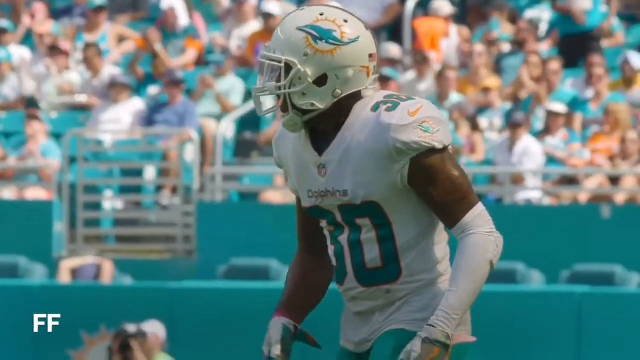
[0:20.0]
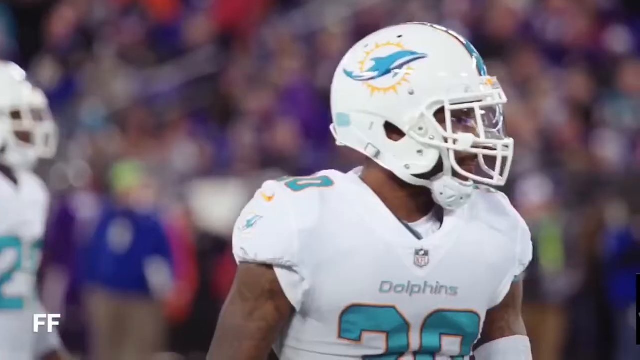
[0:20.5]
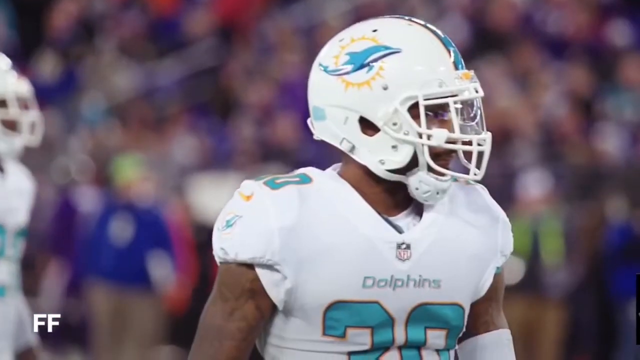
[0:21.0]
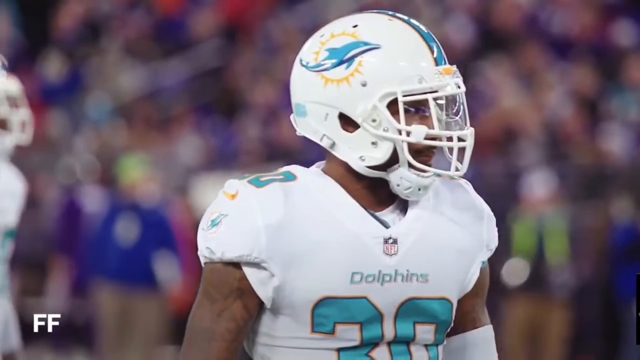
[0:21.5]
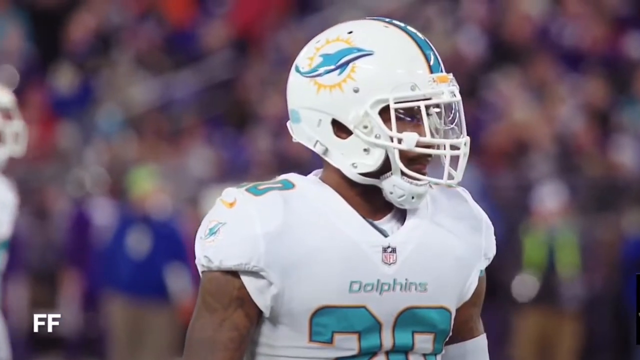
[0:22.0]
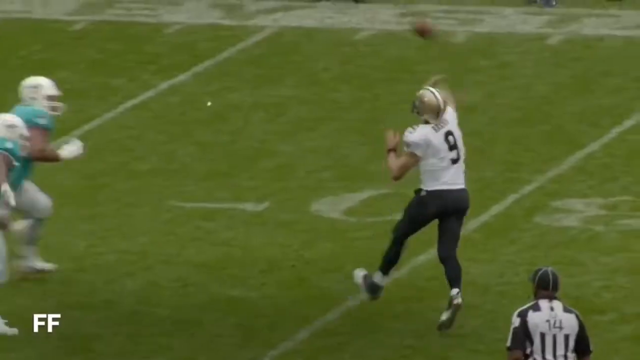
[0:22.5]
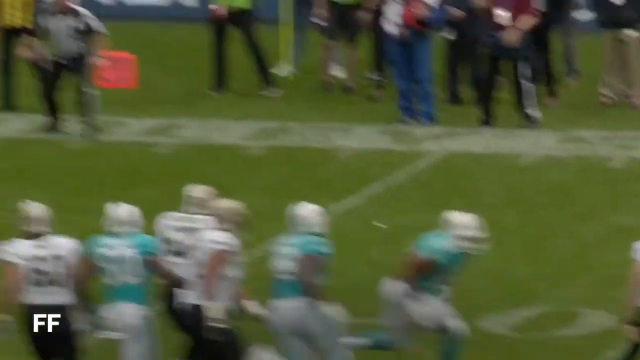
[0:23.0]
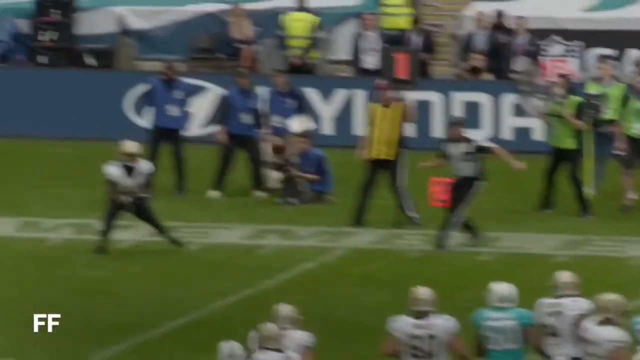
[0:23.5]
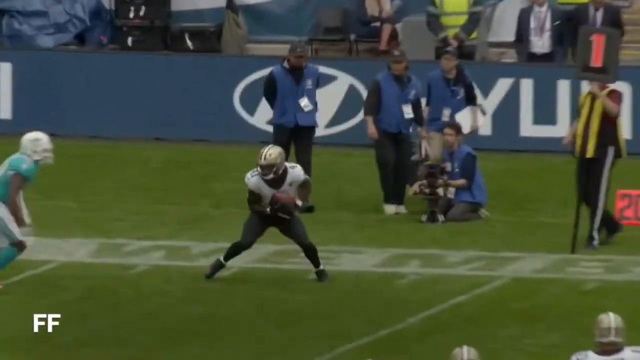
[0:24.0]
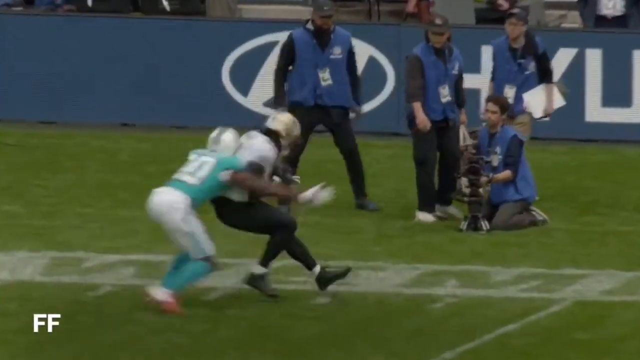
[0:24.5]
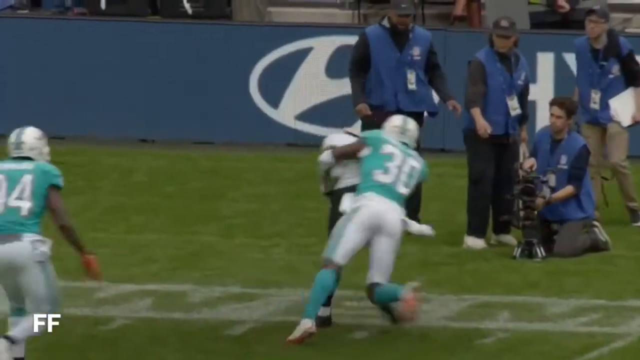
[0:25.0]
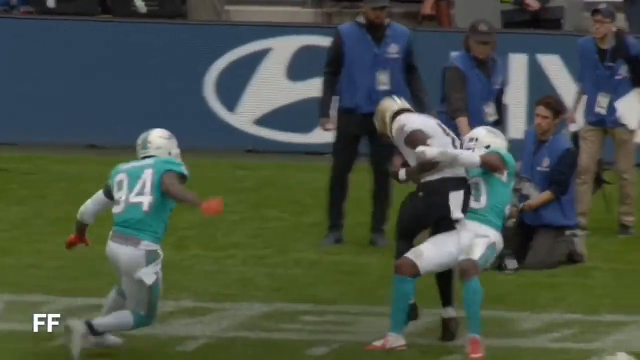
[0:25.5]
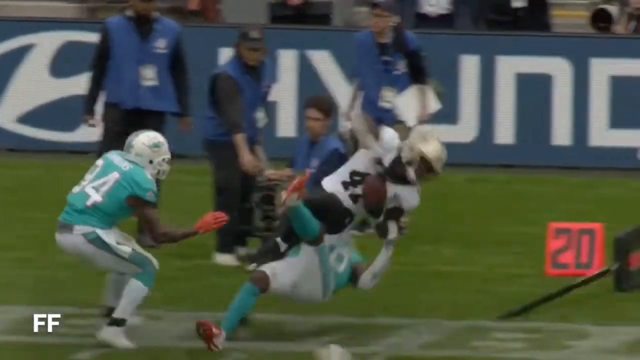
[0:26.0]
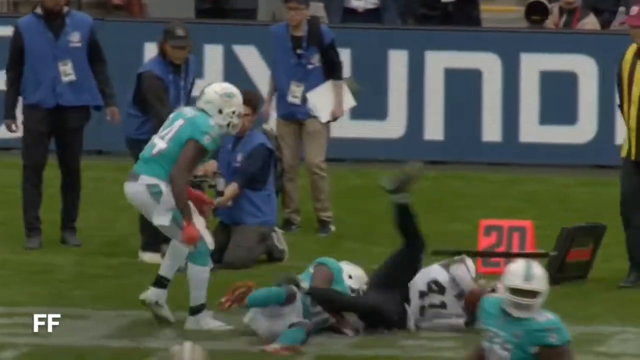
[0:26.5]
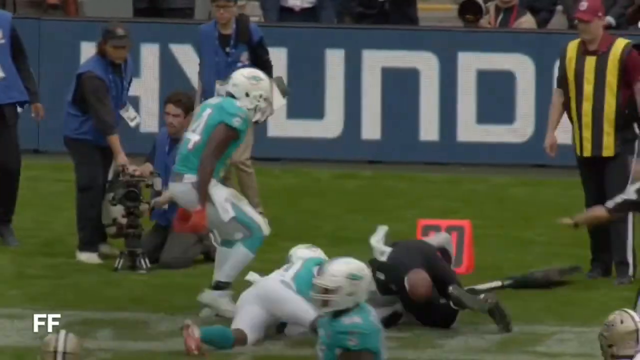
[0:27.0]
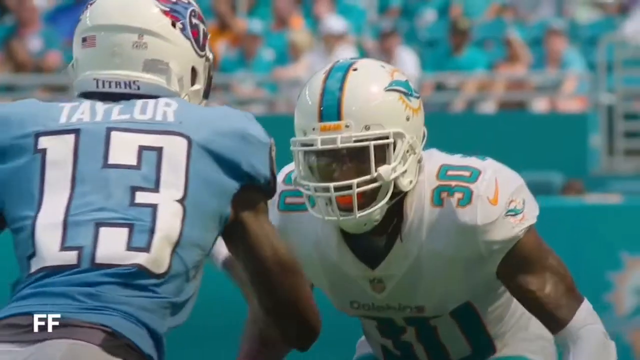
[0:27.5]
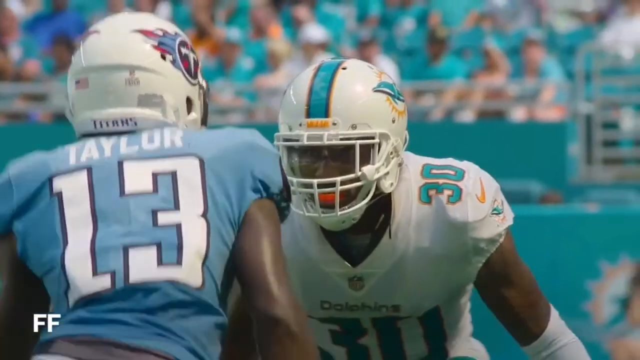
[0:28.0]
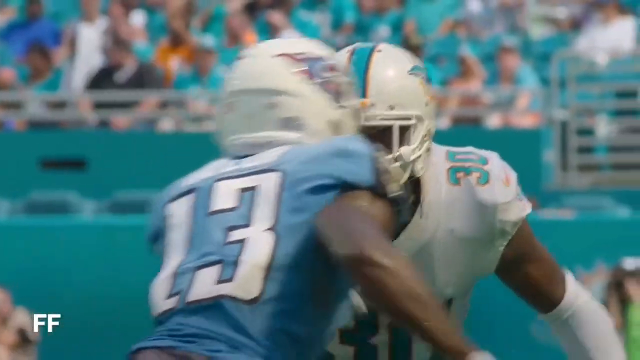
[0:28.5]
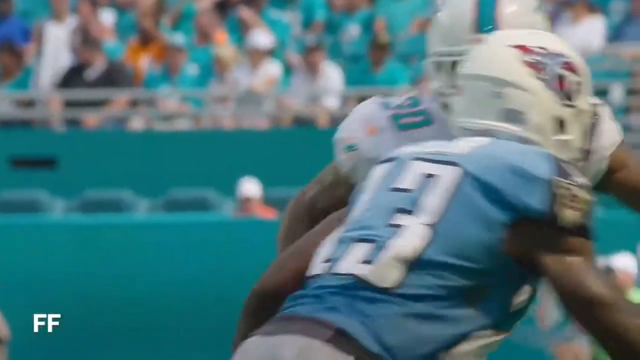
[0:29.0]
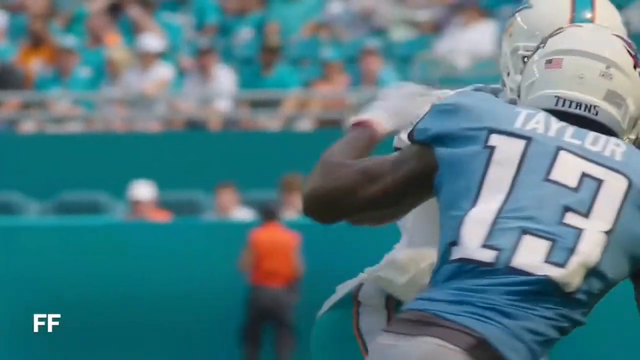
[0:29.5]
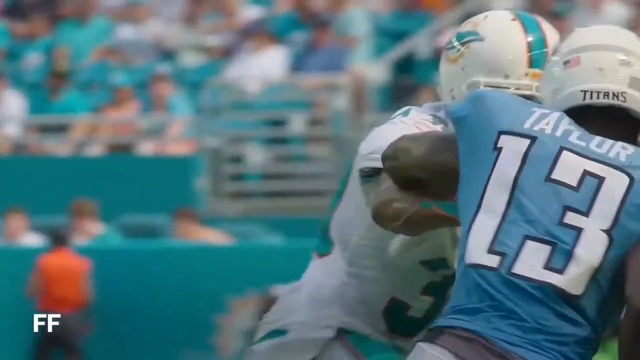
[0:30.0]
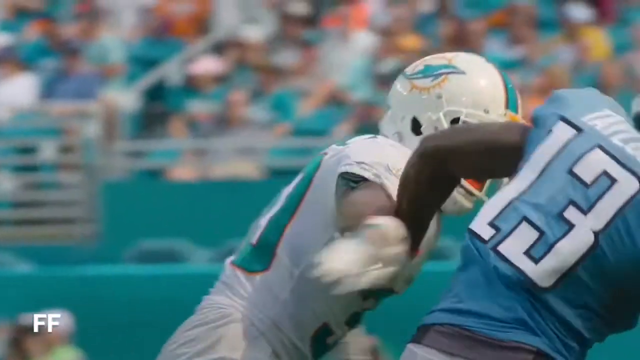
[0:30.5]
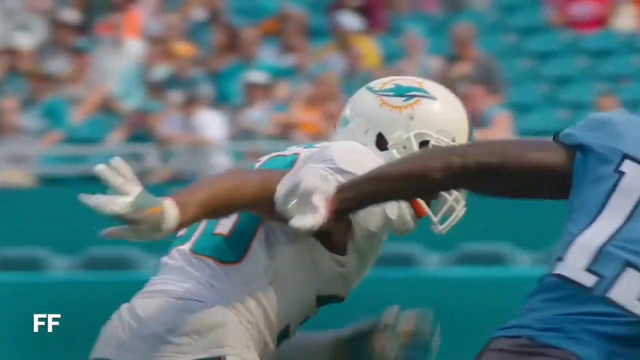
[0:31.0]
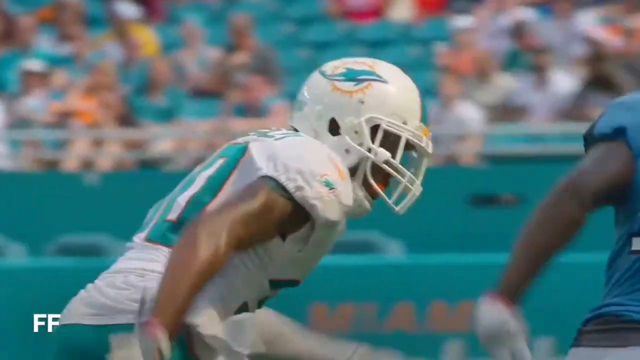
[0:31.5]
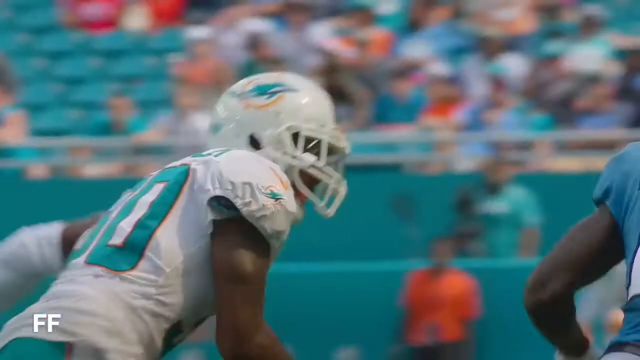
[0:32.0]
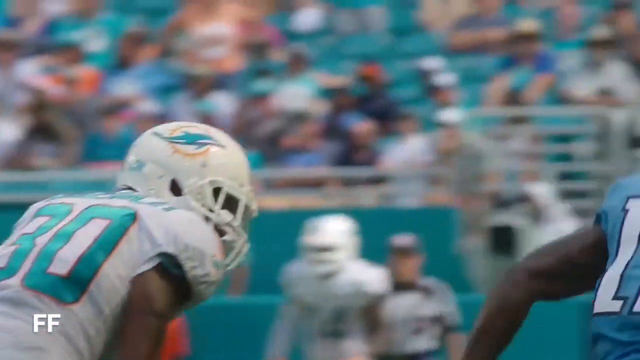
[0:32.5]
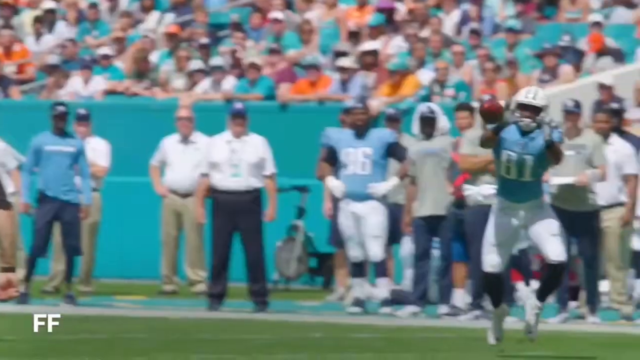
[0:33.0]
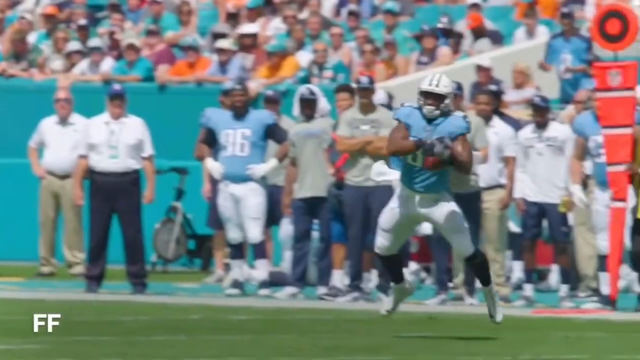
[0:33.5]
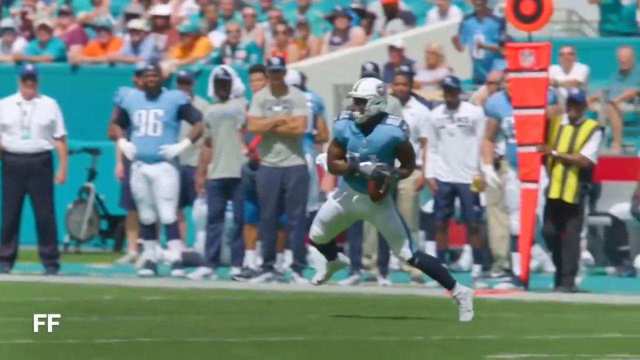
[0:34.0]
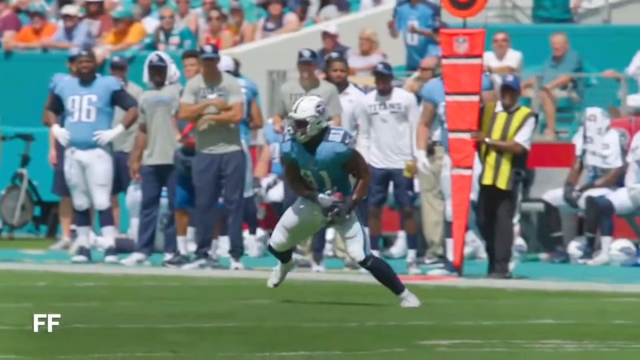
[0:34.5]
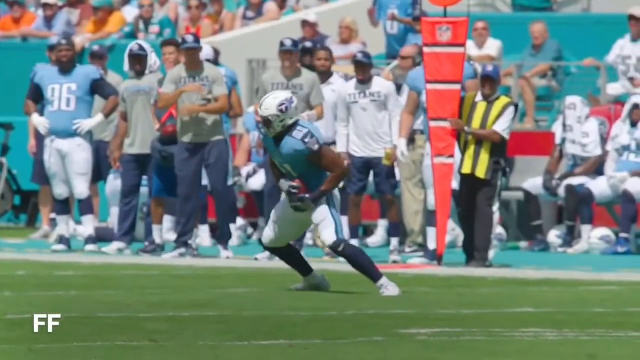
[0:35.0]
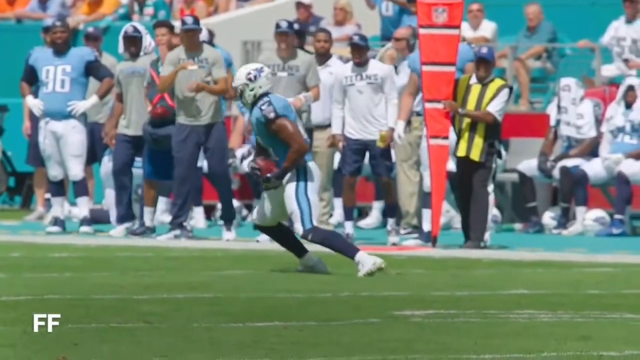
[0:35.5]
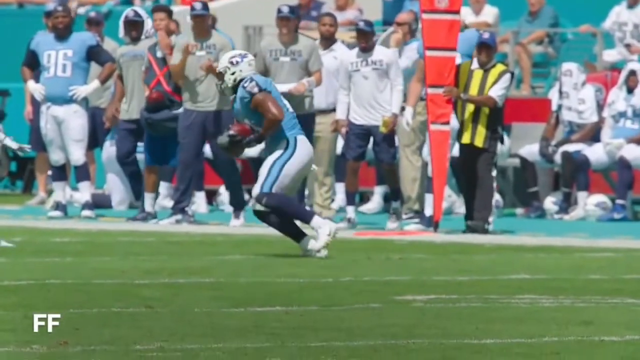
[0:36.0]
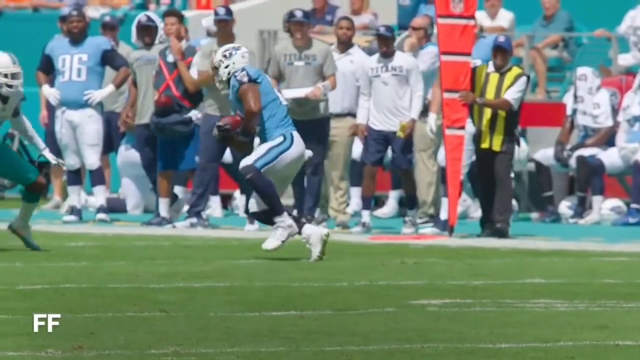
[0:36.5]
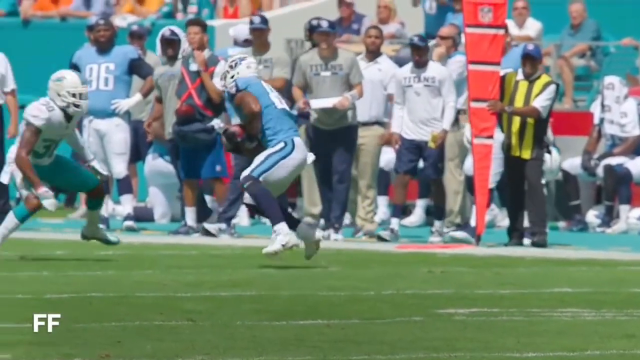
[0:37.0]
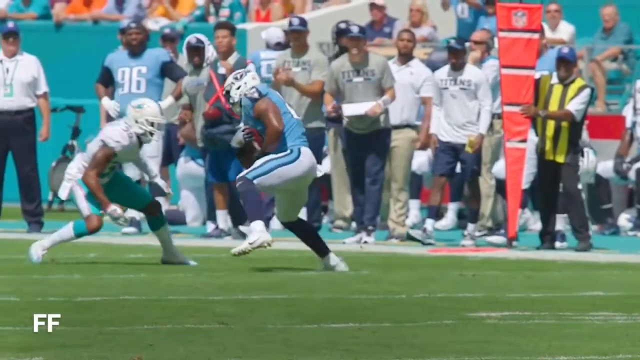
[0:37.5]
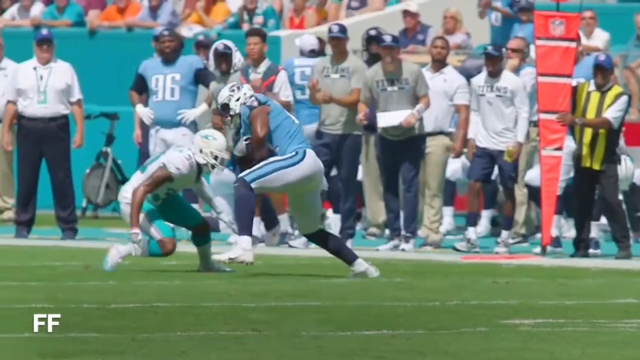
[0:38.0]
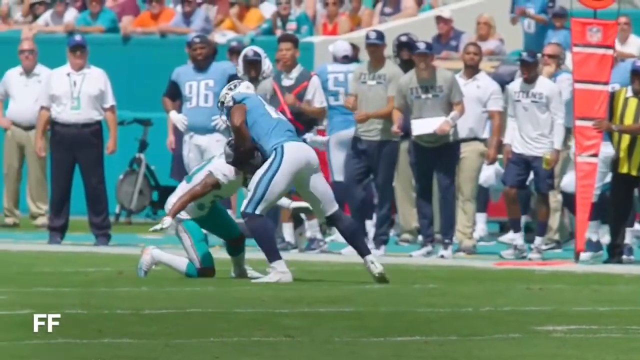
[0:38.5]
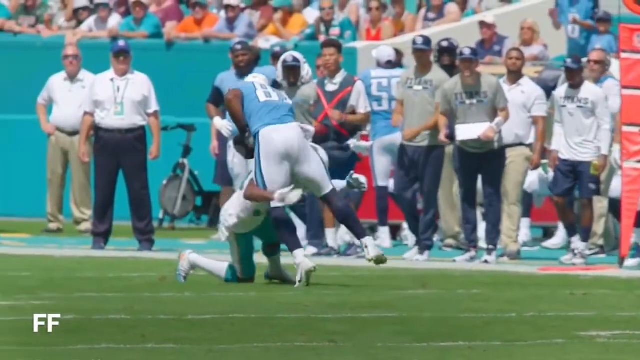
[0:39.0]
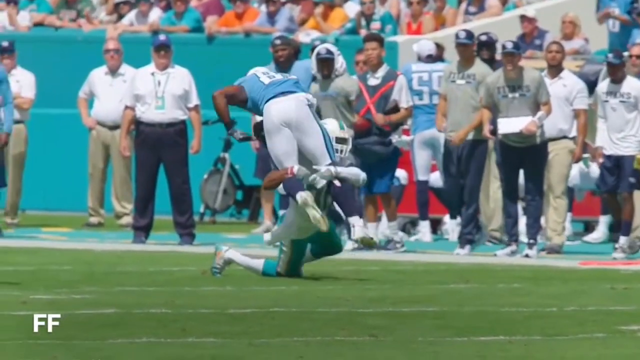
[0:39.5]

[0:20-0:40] Footage shows an NFL player being wrestled to the ground, with a heavy focus on player number 30, apparently the draft player in question. His shirt says "dolphins", and his helmet has a picture of a sun with a dolphin inside it, sort of swimming through the air. On his sleeves he has some sort of bandages covering his lower arms. More footage shows him tackling a player. He may be Chambers, but his name on his shirt cannot be clearly seen. He wrestles a player called Taylor, number 13, and then a player number 8.